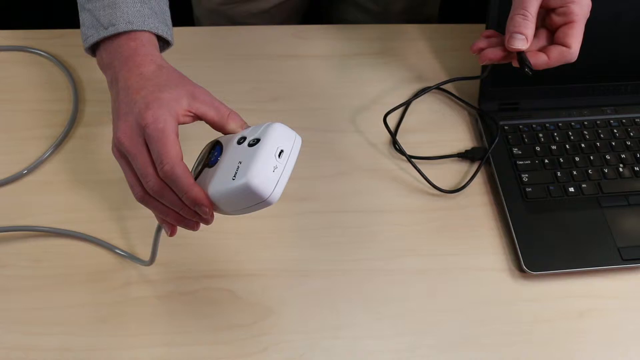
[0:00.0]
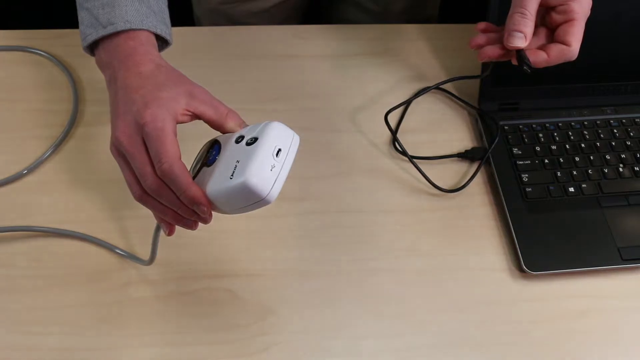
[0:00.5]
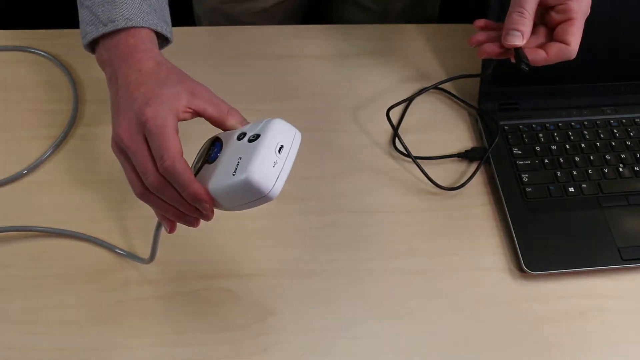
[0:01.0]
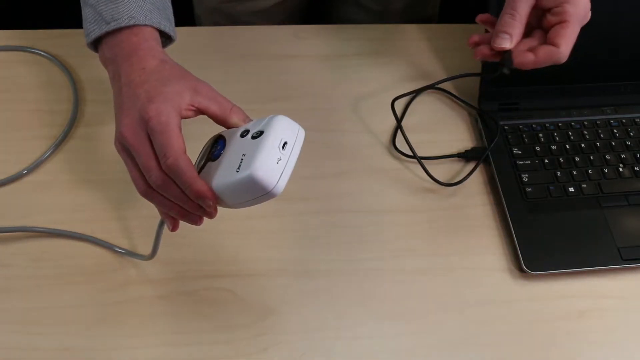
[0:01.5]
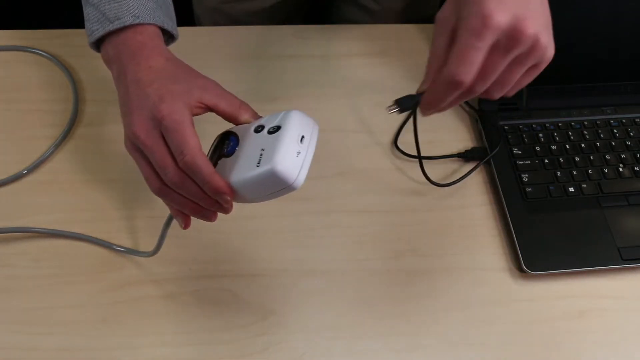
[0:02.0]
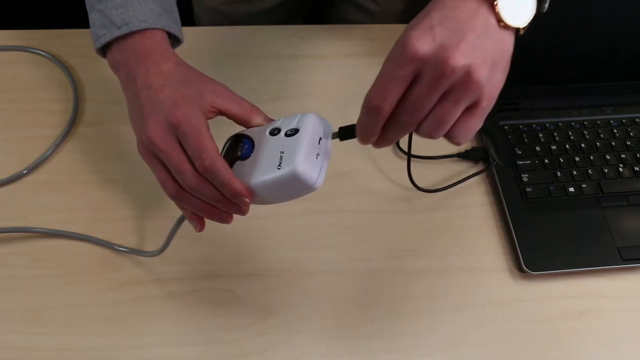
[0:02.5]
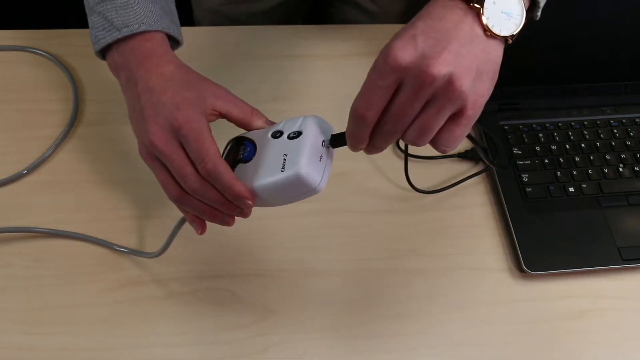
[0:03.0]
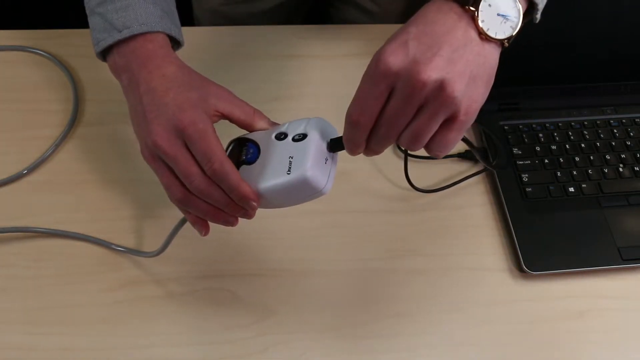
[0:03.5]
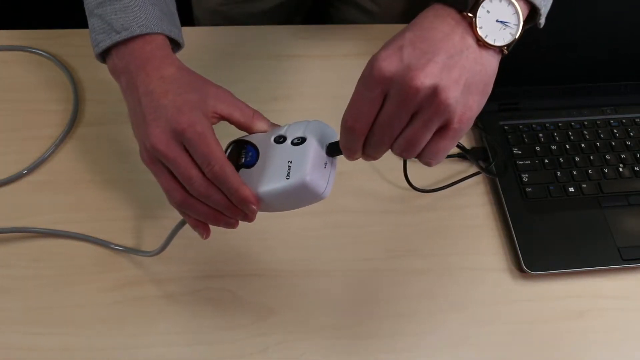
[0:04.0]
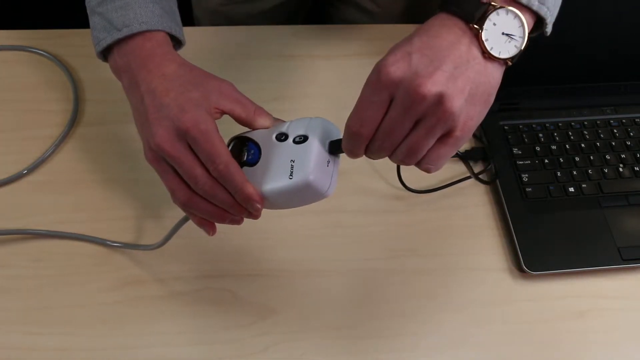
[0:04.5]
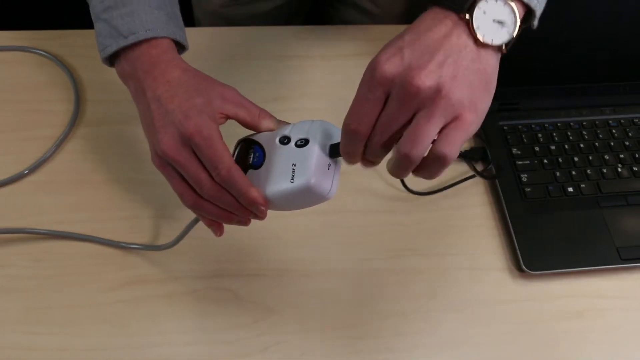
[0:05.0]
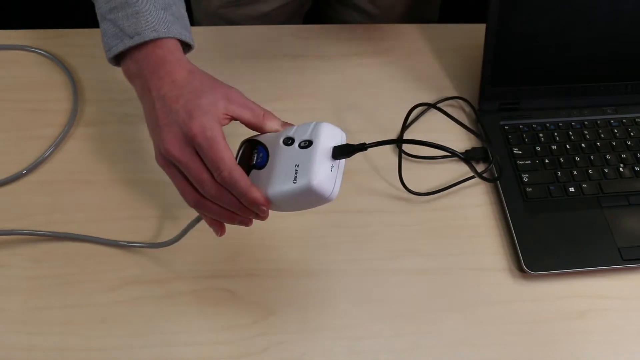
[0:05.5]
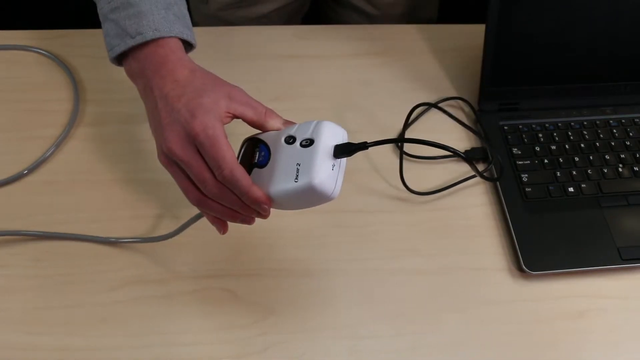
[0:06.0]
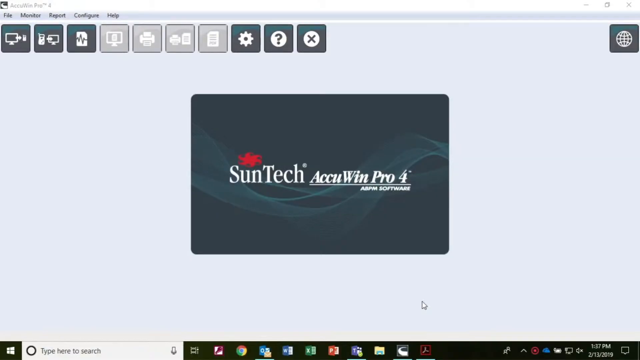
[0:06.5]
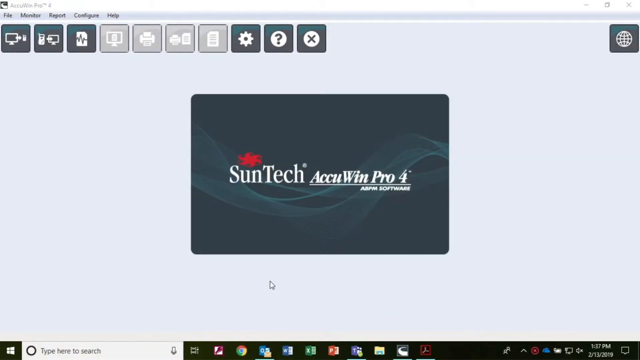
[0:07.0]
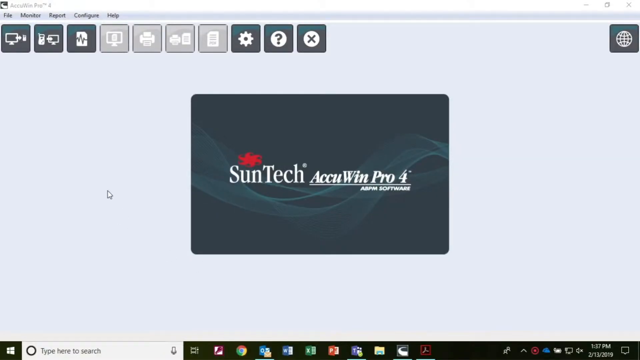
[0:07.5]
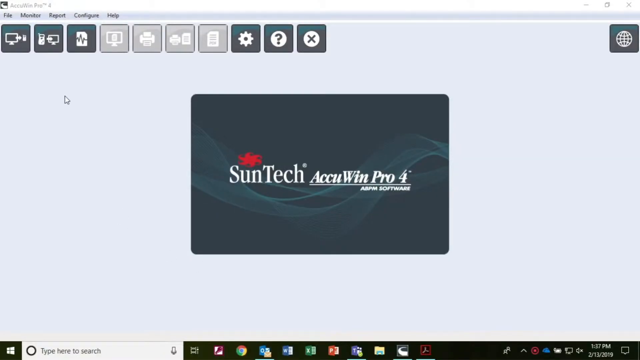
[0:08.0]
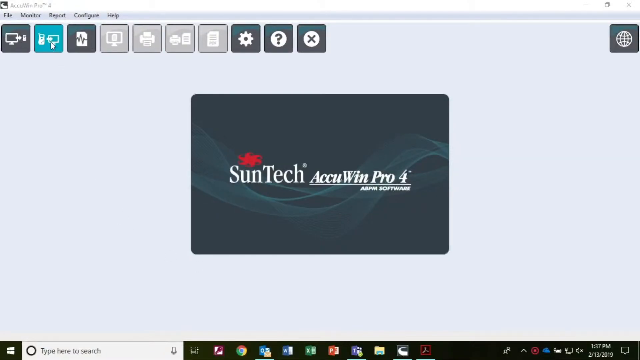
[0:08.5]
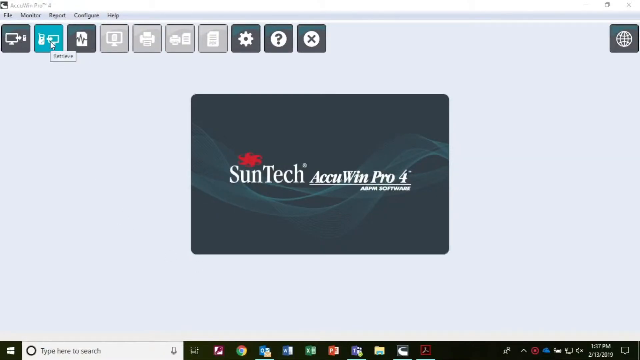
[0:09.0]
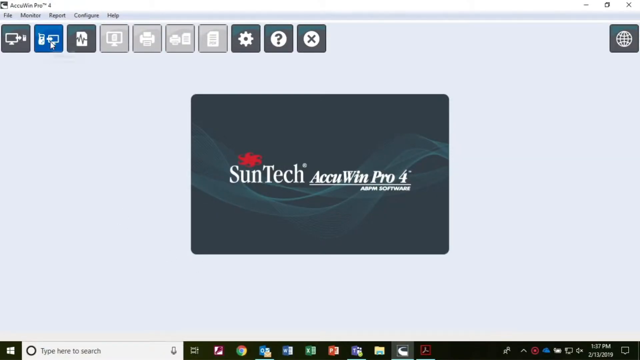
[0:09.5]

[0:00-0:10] A Caucasian man is seen only by his hands. He holds a white box in one hand and a black USB cord in the other; the cord is connected to a laptop, and he connects its other end to the white box. He appears to be wearing a watch whose face uses Roman numerals instead of numbers, and the band looks brown. Once the USB is connected to the box, a screen comes up on what looks like Windows 11, showing an application called Sun Tech R2 win pro 4. The application has several icons: one looks like it transfers data from the computer to the box, another looks like it transfers data from the box to the computer, and one is kind of a wave. There is also what looks like a print icon, what looks like a document icon, a gear icon for settings, a question mark, and an X, probably to close the application.